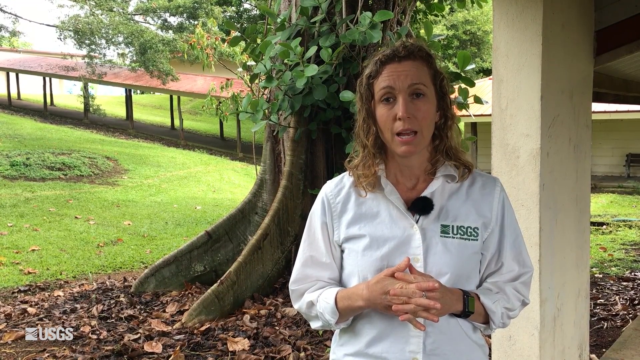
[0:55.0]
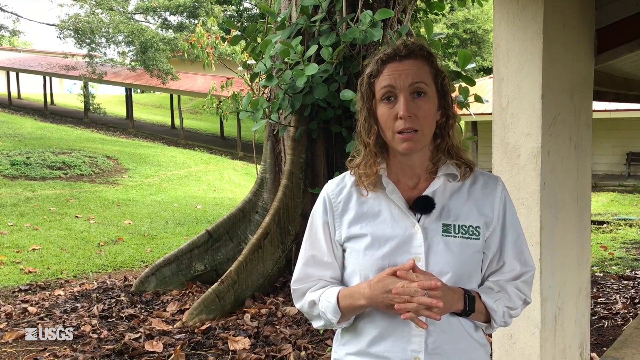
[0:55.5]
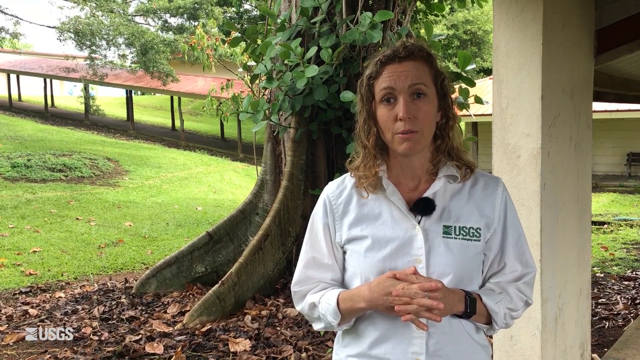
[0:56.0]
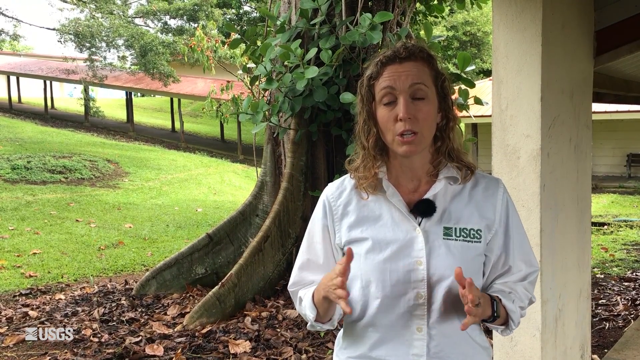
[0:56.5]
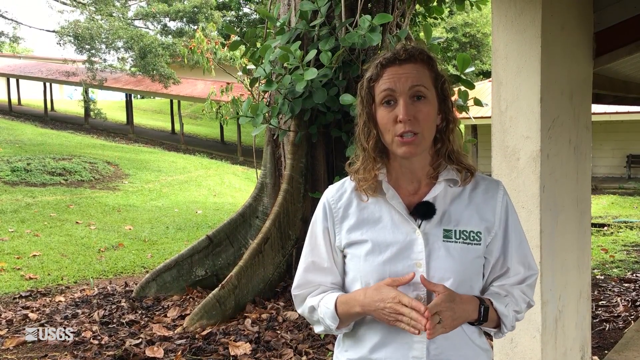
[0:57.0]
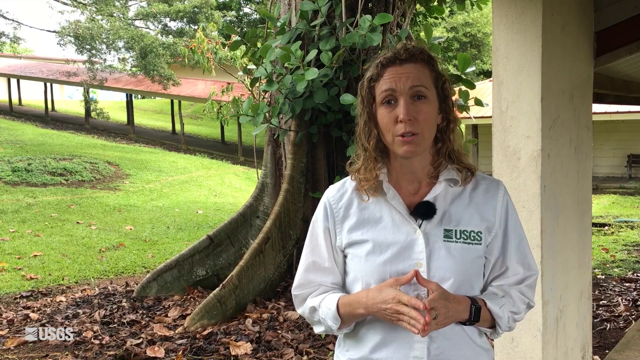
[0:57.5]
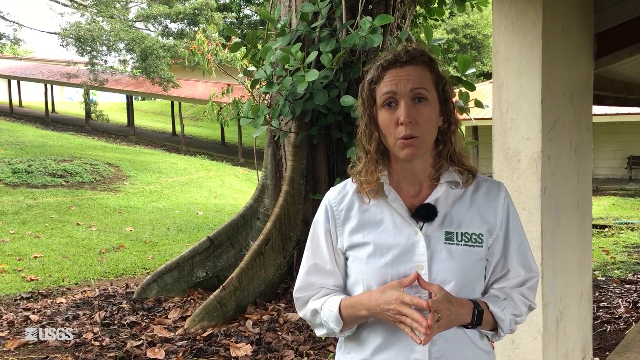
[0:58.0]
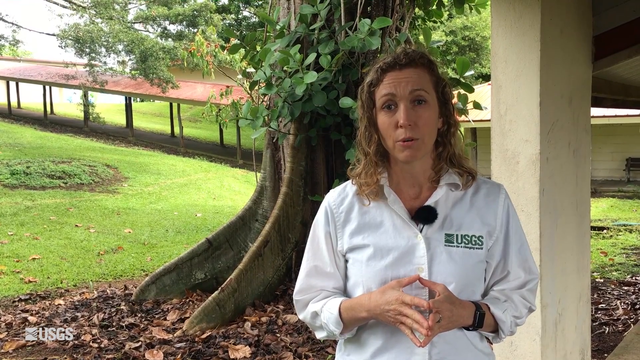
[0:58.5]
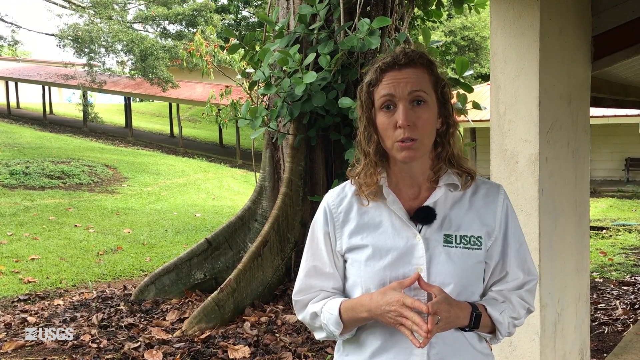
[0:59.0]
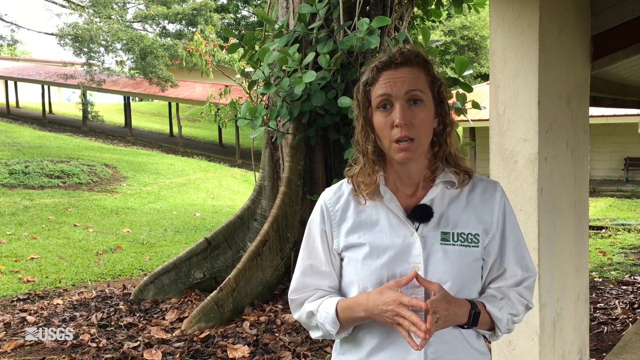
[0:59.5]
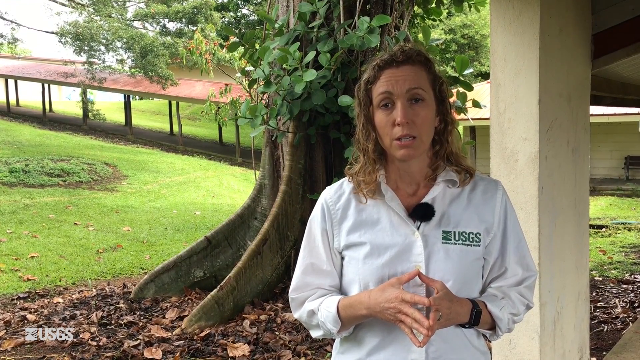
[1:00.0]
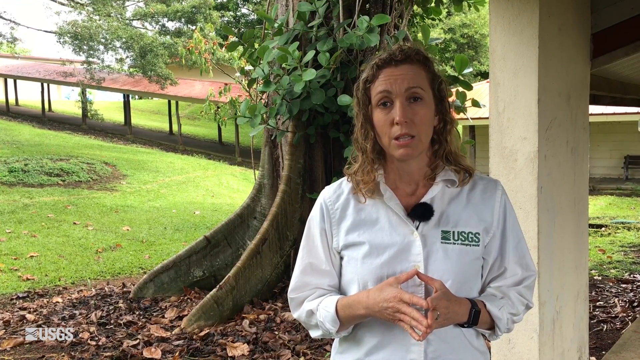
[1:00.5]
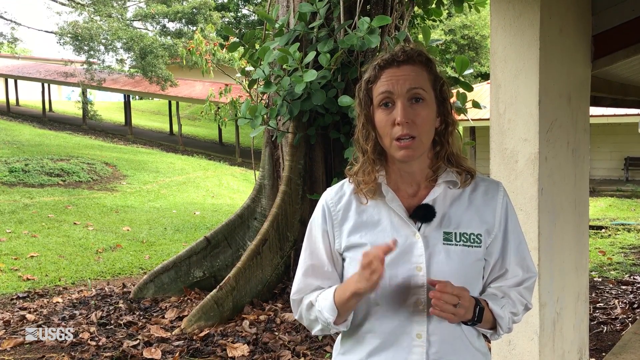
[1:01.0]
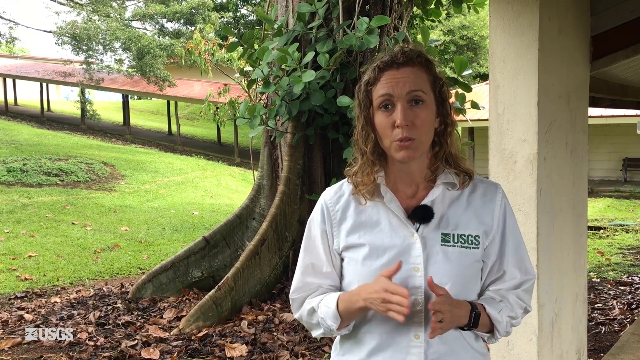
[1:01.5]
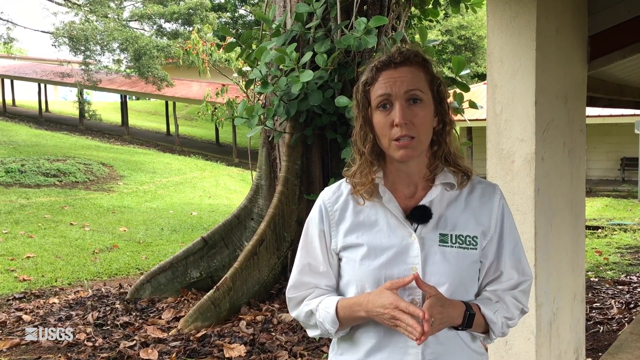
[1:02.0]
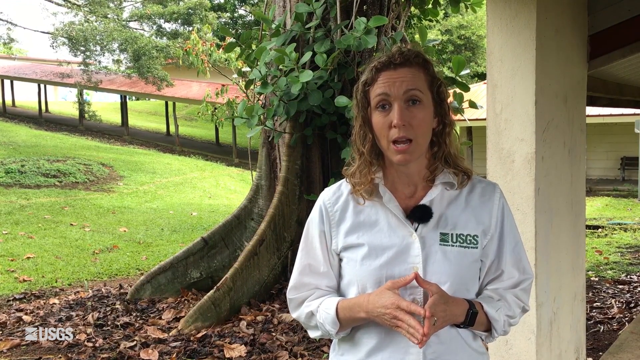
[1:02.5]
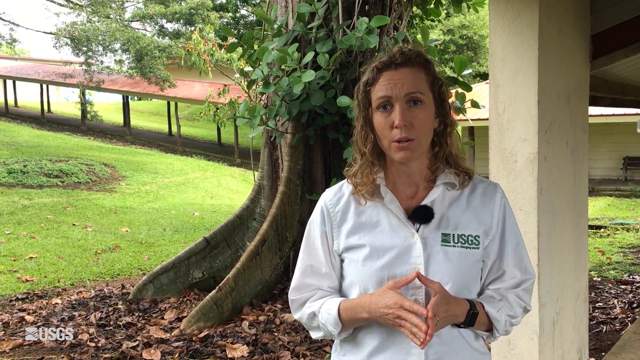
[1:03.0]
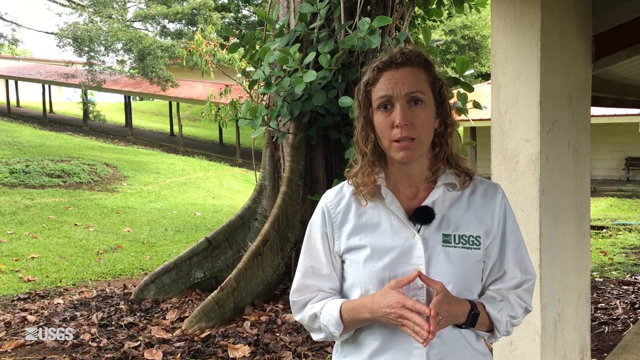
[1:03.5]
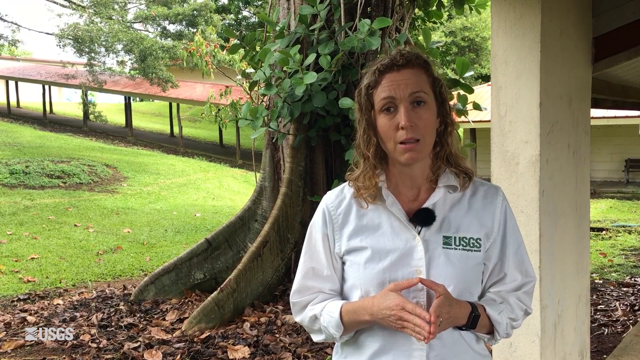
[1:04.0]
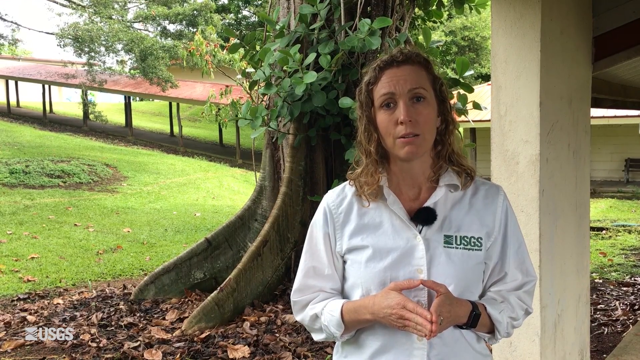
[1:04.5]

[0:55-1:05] The geologist talks about Kilauea, with the USGS watermark still in the corner. She is in front of the tree, with the pavilion structure behind her; its roof is reddish brown. There is green grass with sort of a circle in the middle of it, and there also seems to be a house or other building in her background, probably the building she works in. The foliage seems quite lush, and there appears to be water in the background behind the pavilion structure. Directly underneath the tree there are brown leaves on the ground and no grass, and there looks to be some moss on the tree. She holds her hands in front of her with her fingers and thumbs touching, and moves her hands a couple of times for emphasis. She wears a microphone and a white shirt that says USGS in green, has highlighted blonde and brown hair, and wears a black watch that looks like a smart watch.